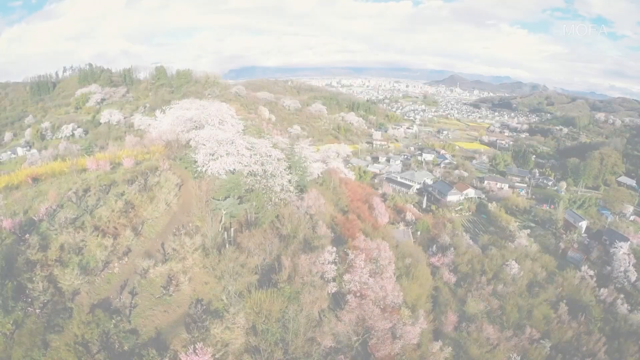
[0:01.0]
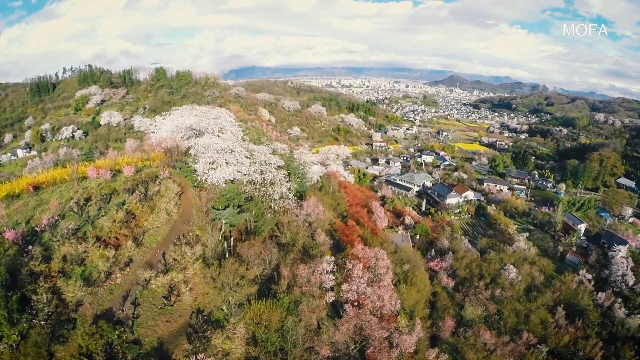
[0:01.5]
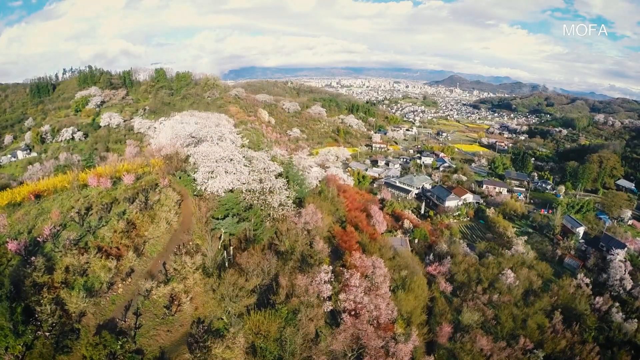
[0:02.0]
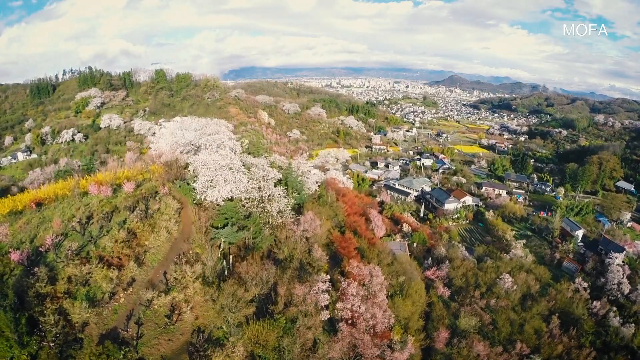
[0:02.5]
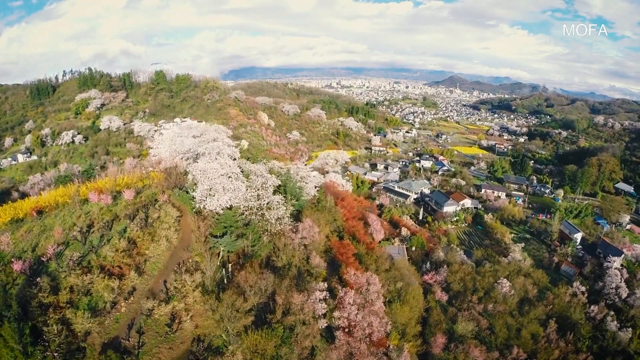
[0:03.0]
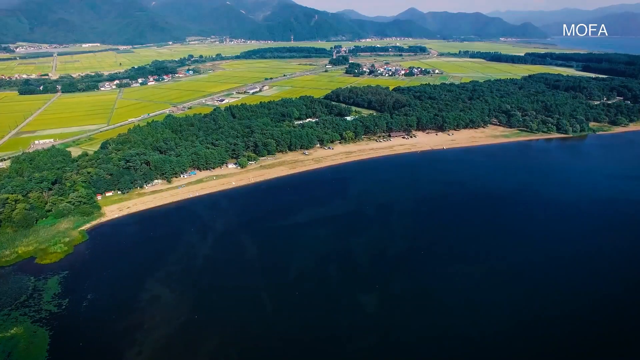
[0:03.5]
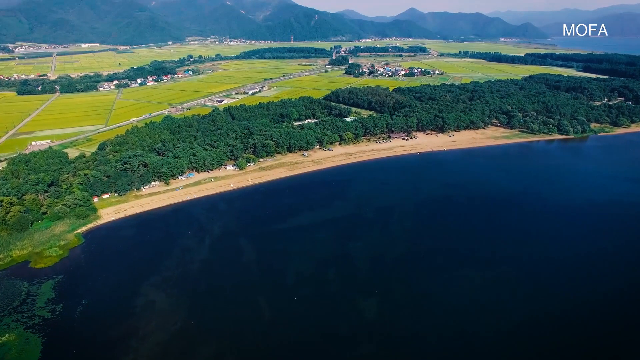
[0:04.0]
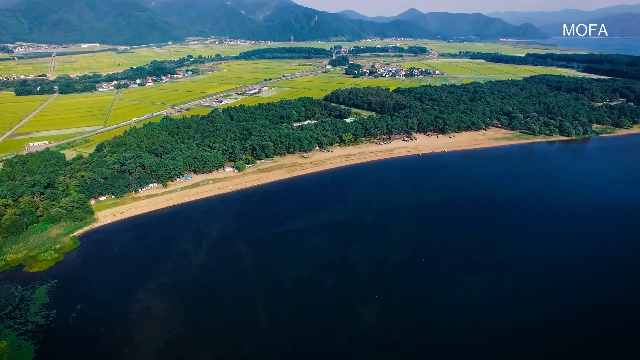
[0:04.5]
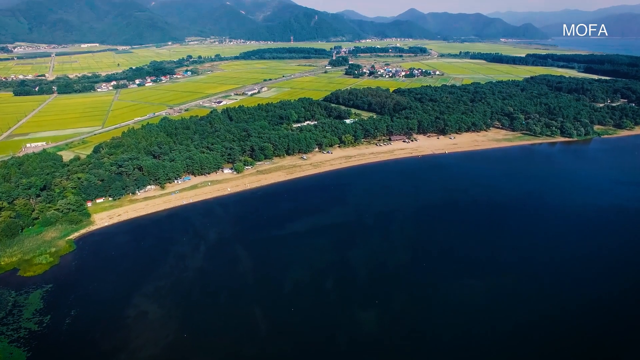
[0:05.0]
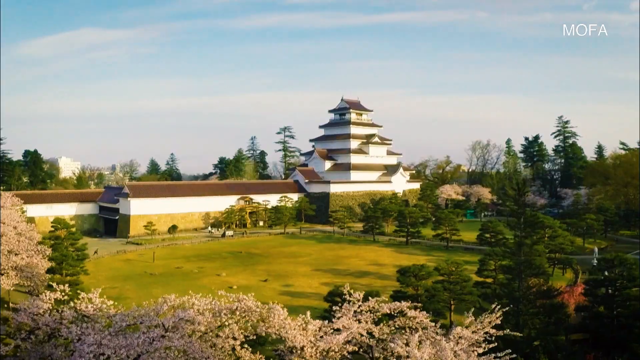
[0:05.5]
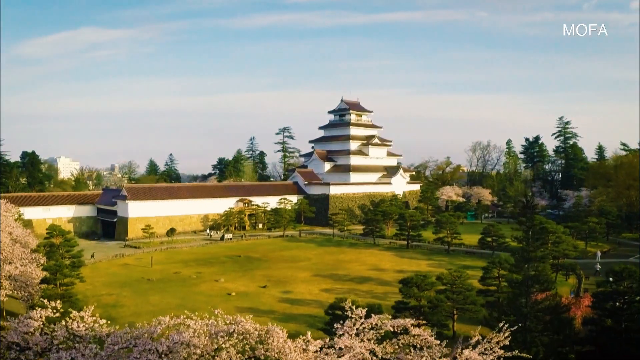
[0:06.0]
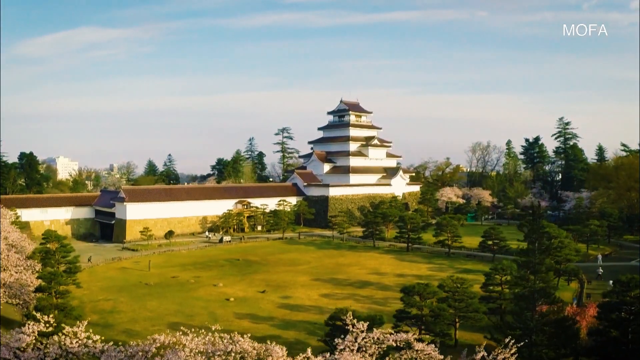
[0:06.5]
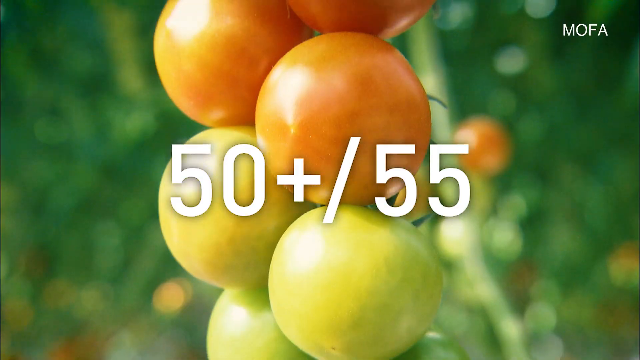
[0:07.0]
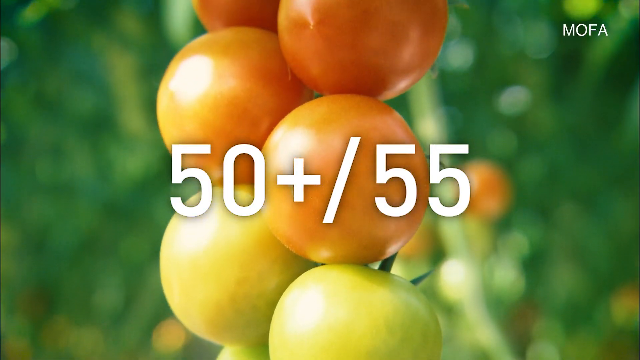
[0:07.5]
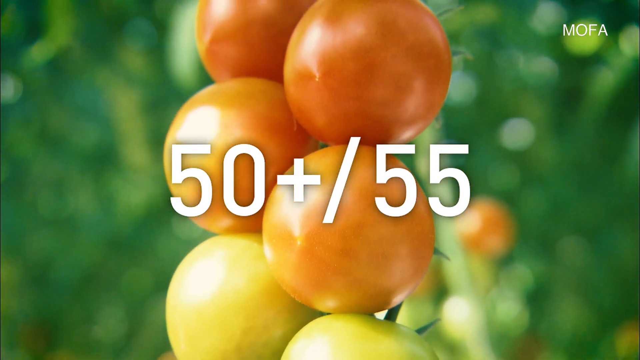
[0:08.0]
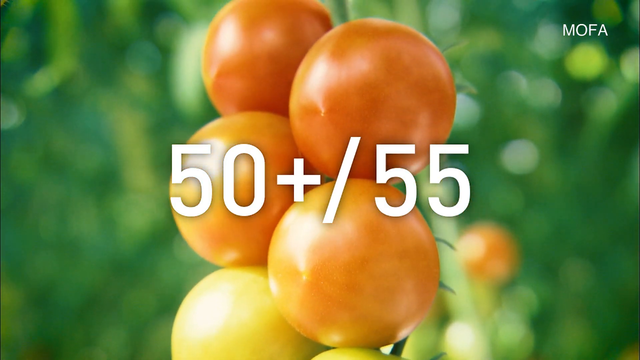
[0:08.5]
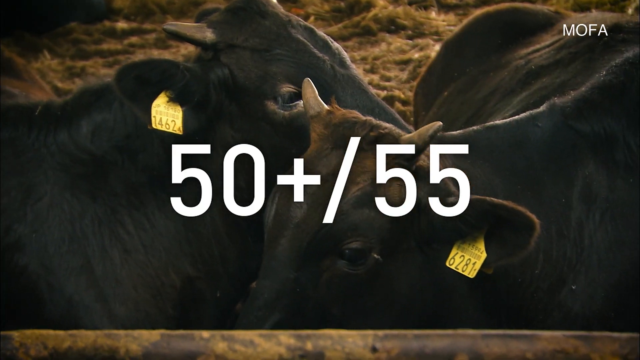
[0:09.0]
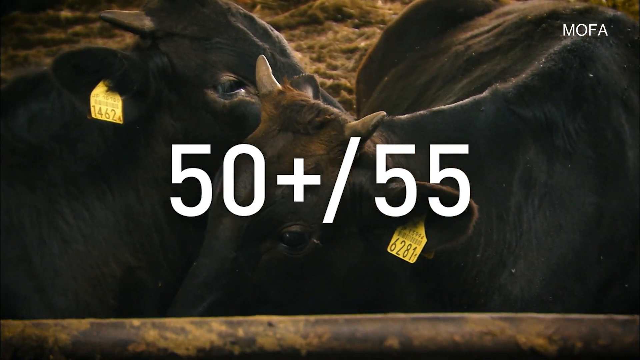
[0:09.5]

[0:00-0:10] Drone footage shows a series of different landmarks. It first overlooks a very large valley from up near the mountaintops, with villages and many different buildings in the background among greenery, bushes and flowers of different colours. Another drone shot follows, showing a large body of water with sand on the shoreline, trees and very lush green bushes. In the background is a light green field that looks to be planted, with buildings or homes scattered here and there. The view then pans to an area with a nice building and a field of trees around it. Next comes a vine with what look like tomatoes, along with the text "50 plus 55", and then a group of cows with tags on their ears, with "50 plus 55" still showing.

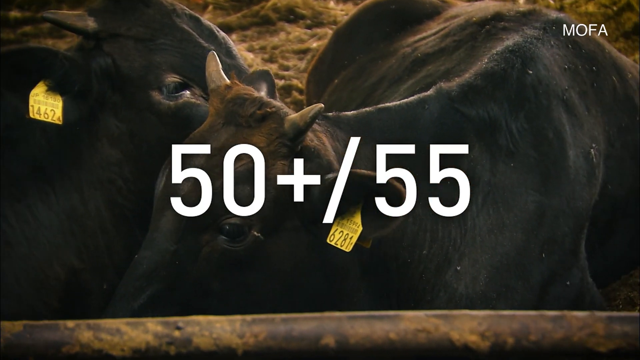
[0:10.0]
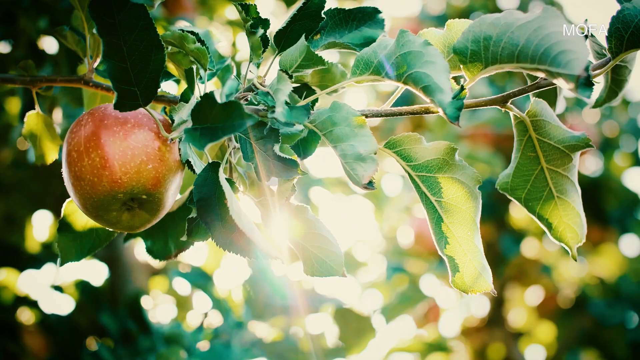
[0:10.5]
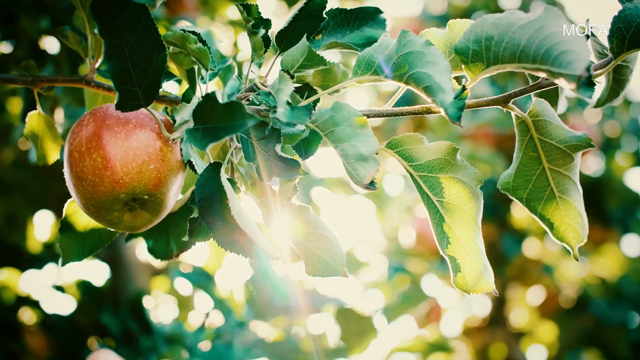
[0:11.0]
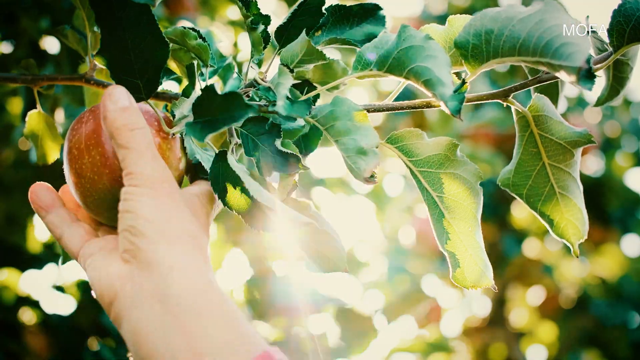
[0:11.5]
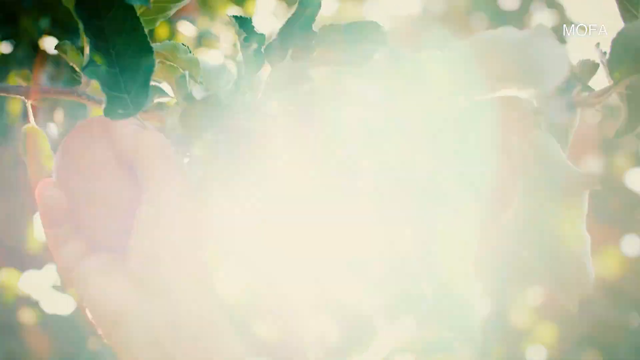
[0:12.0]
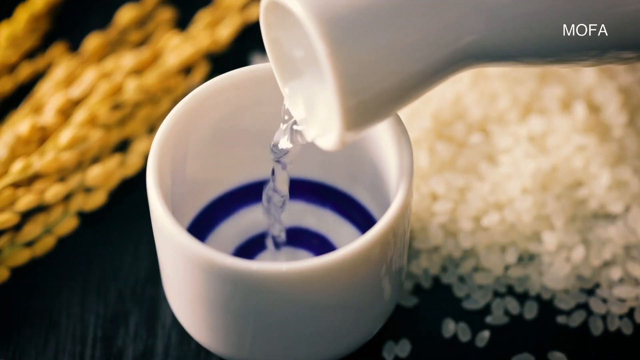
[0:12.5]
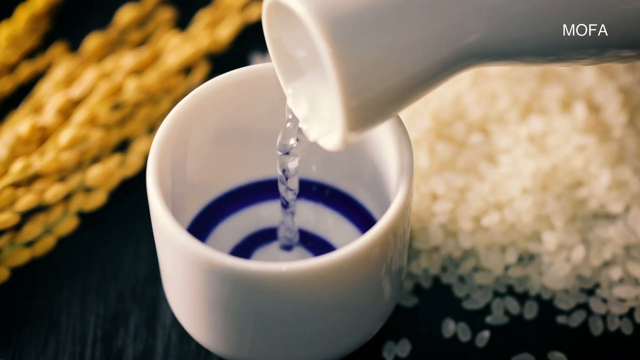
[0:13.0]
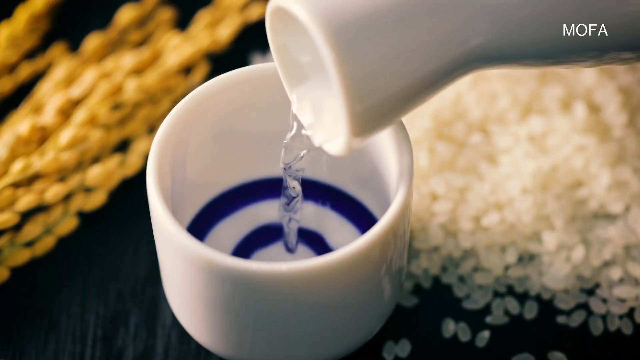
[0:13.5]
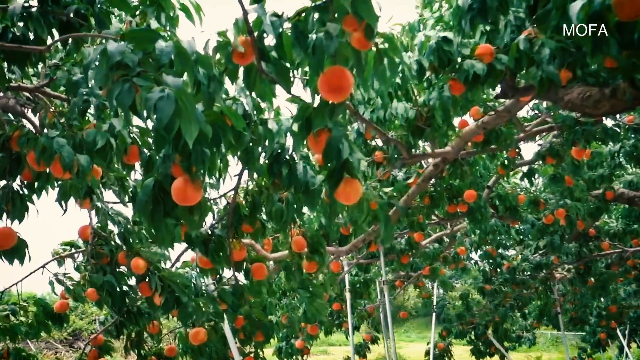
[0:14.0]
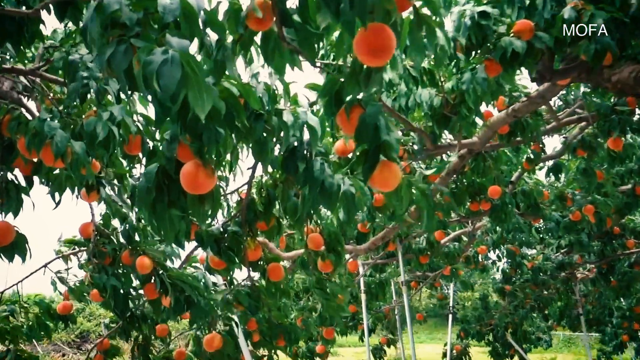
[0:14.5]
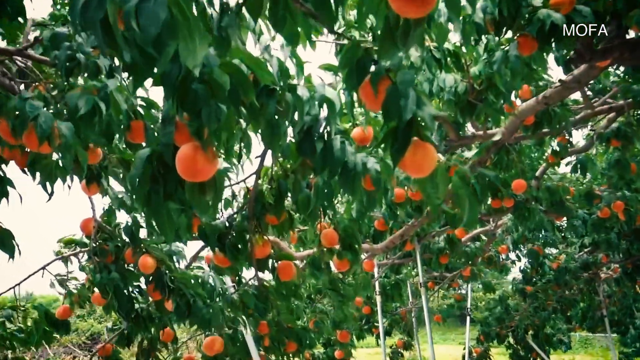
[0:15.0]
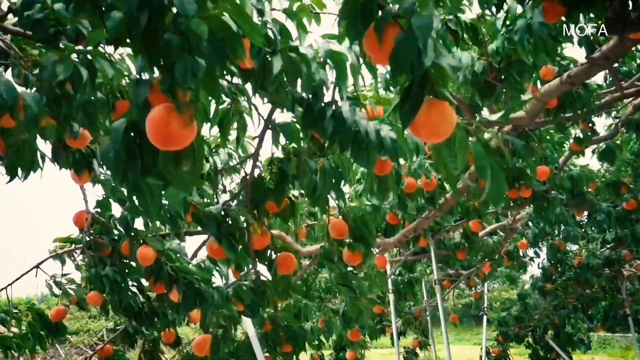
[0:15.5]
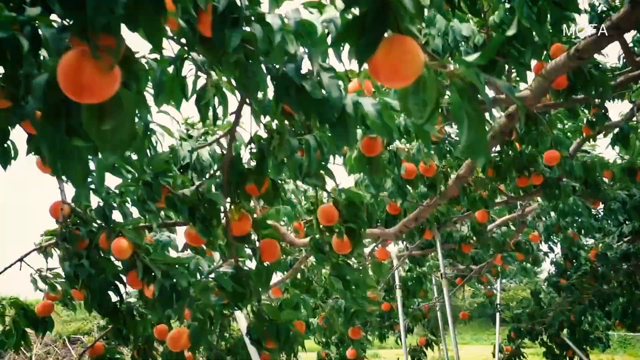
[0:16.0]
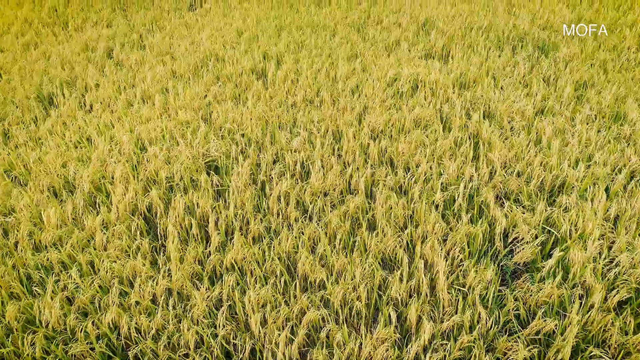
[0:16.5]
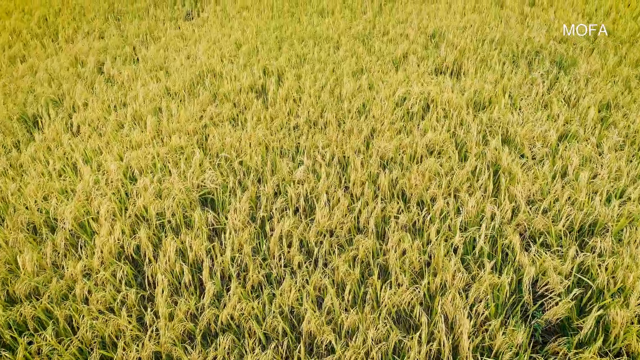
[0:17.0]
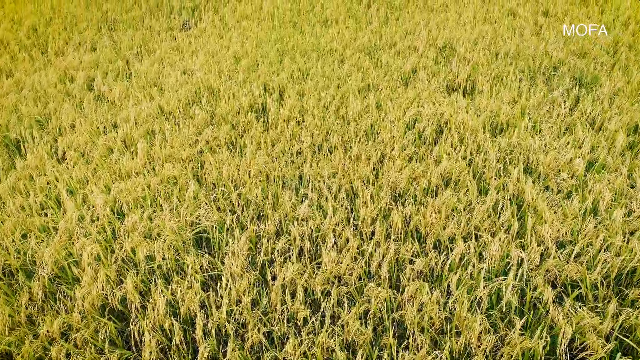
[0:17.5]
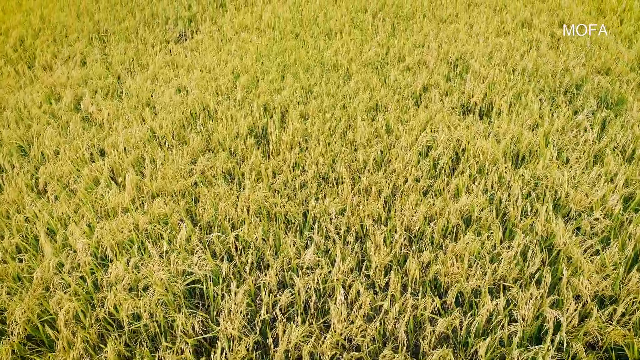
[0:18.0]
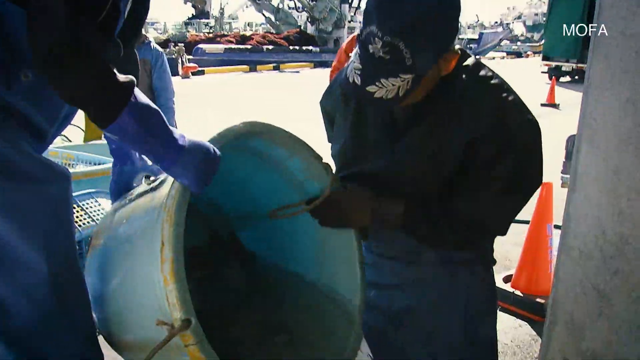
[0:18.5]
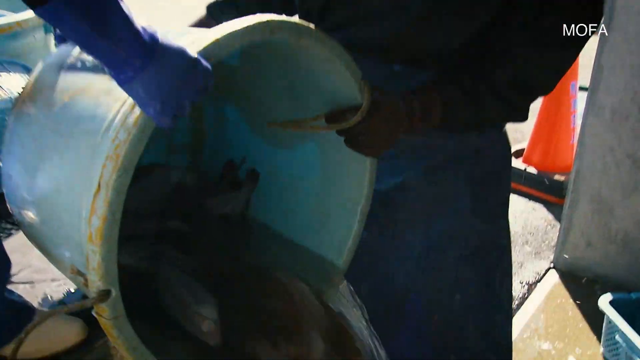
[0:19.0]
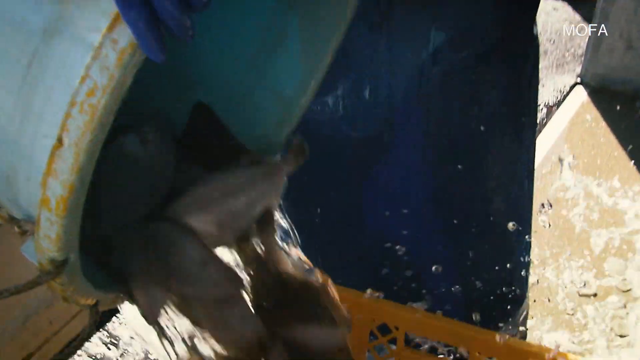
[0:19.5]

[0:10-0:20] A tree branch comes into view with an apple growing on it, still attached. Leaves are all over the background, which is very blurred, but other apples can be seen growing on different branches, and sunlight comes through the branches toward the camera. A hand reaches up, grabs the apple and takes it off the tree. The scene changes to a mug with blue circles at the bottom as water is poured into it from a pitcher. Next is a grove of orange trees, with rows and rows of branches, lush deep green leaves and oranges all over the place. The view pans to a field of what looks like wheat. Lastly, a fisherman gets a bucket and tips it to the side, draining the water as fish come out of the bucket into a basket, where they are drained.